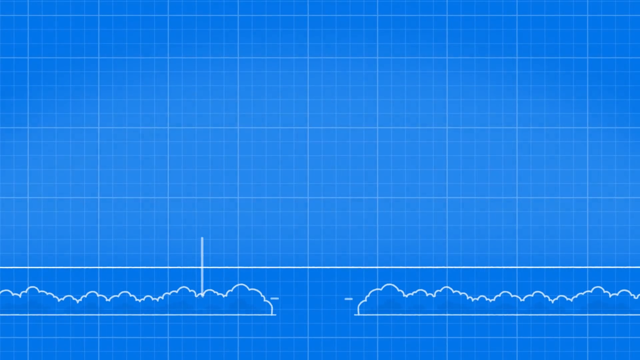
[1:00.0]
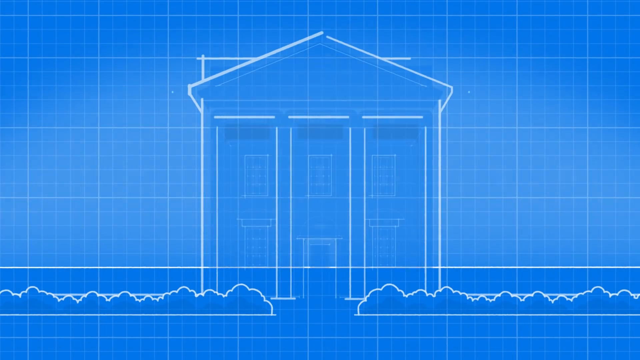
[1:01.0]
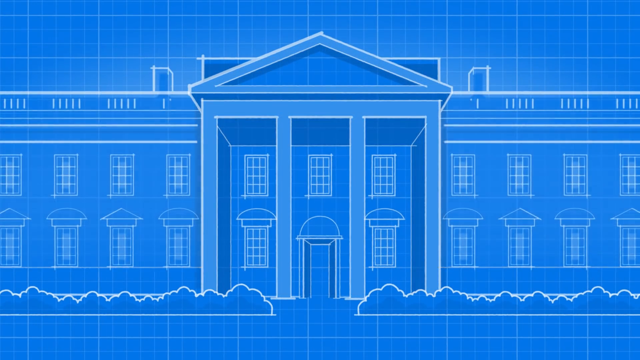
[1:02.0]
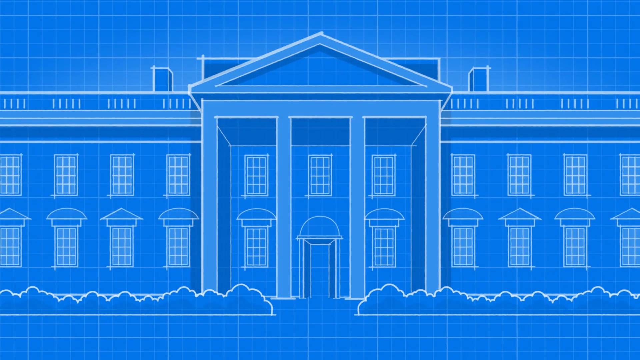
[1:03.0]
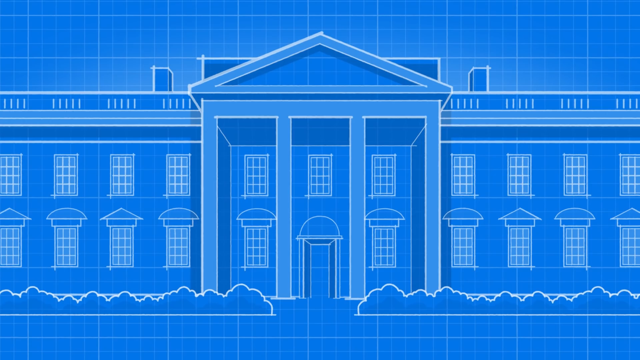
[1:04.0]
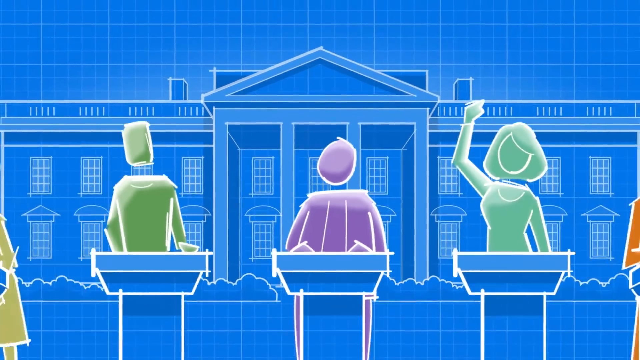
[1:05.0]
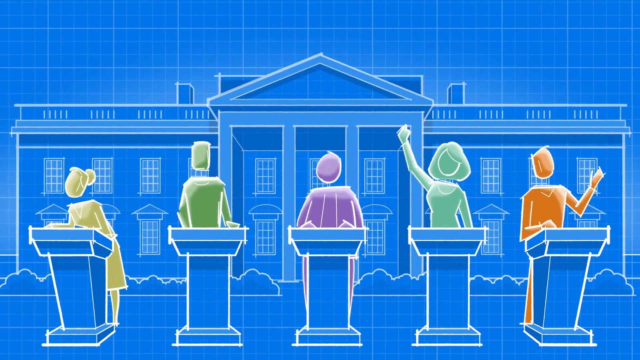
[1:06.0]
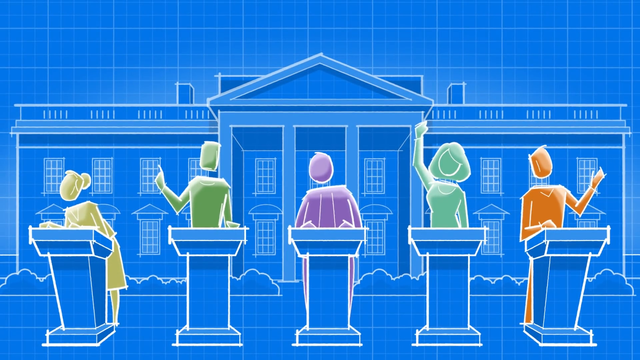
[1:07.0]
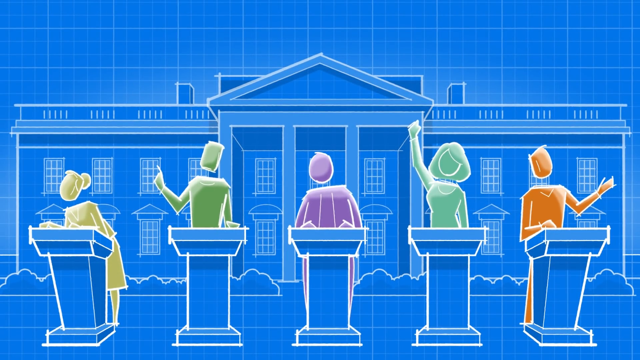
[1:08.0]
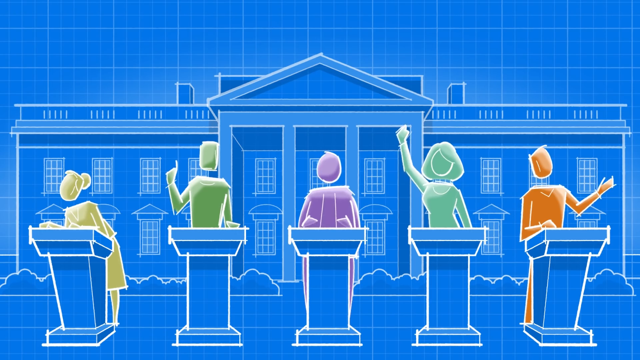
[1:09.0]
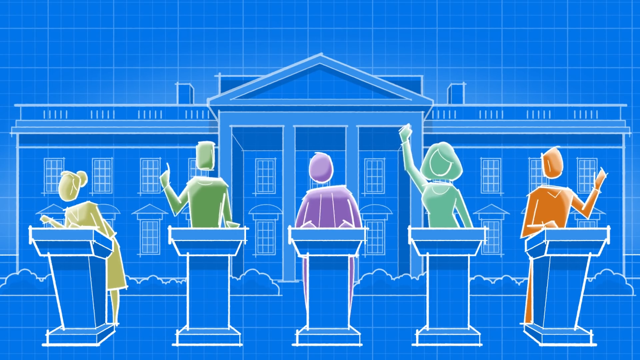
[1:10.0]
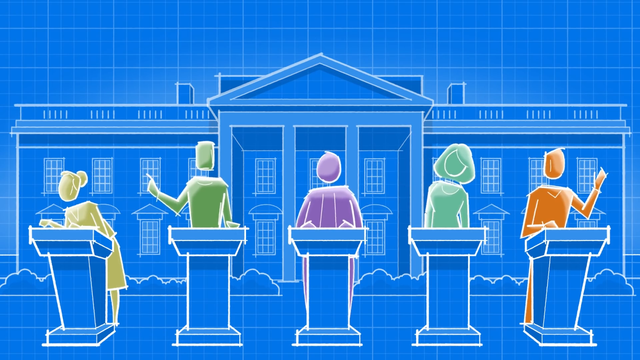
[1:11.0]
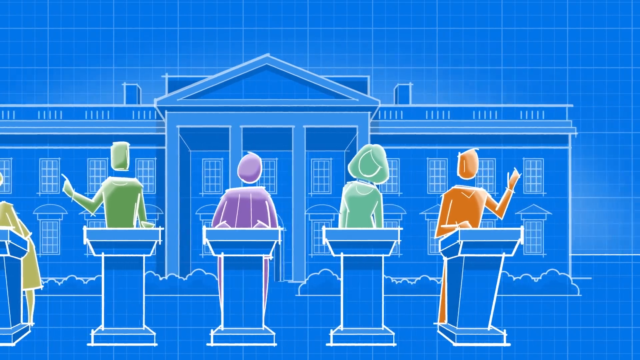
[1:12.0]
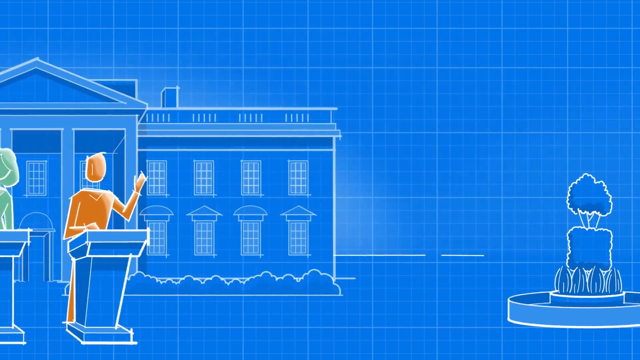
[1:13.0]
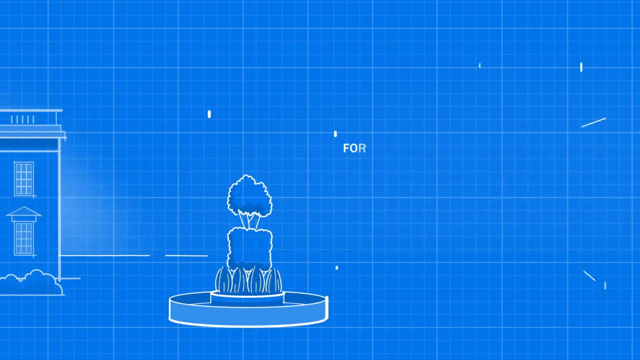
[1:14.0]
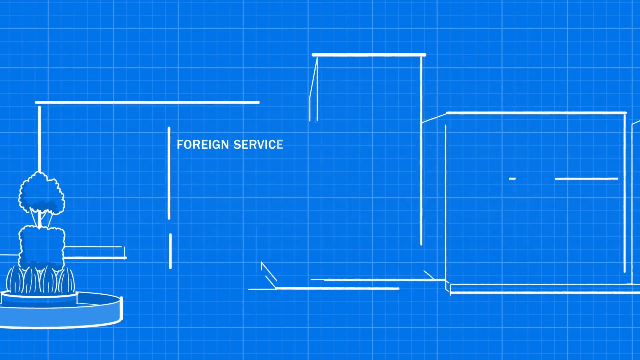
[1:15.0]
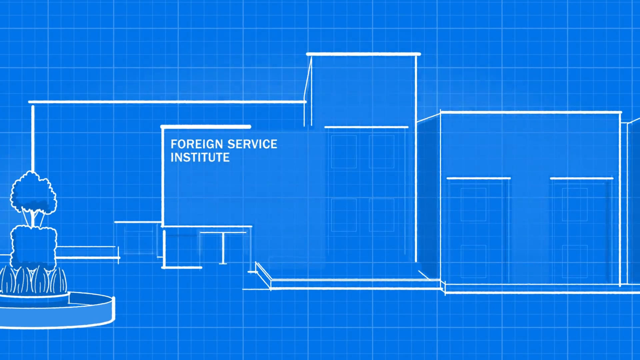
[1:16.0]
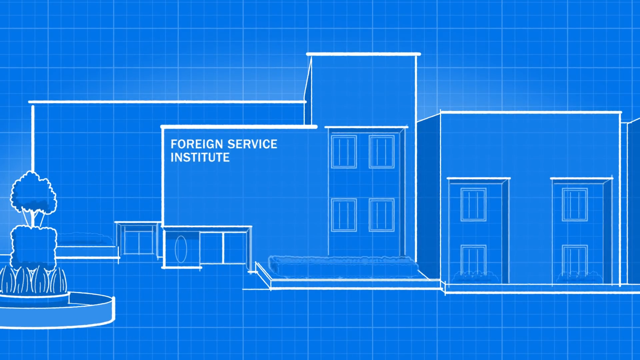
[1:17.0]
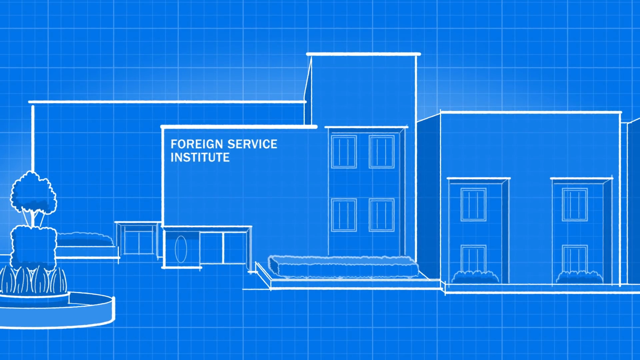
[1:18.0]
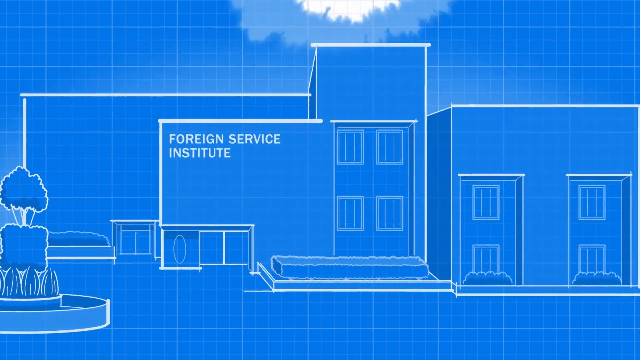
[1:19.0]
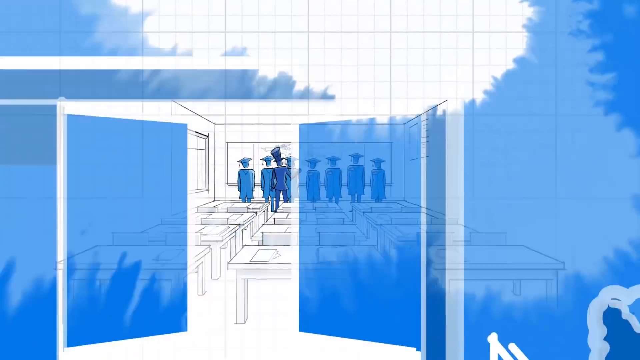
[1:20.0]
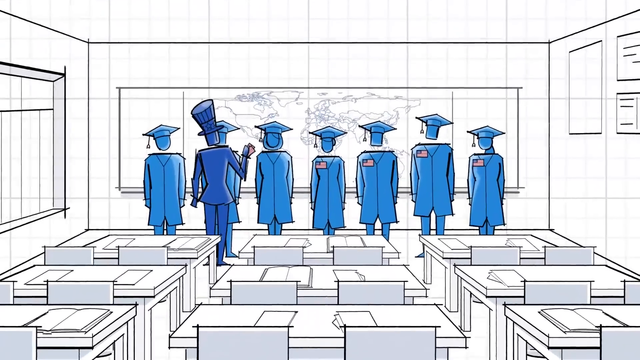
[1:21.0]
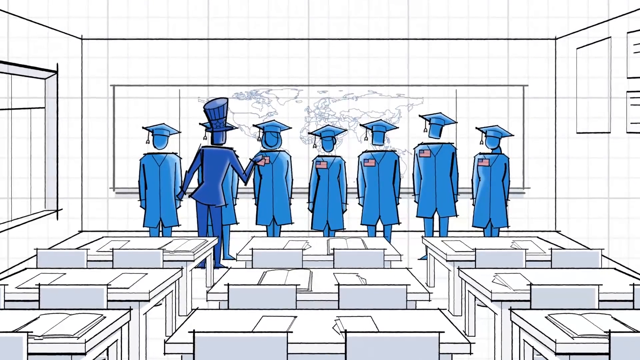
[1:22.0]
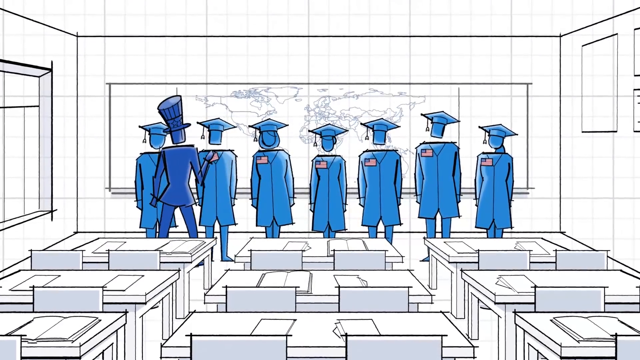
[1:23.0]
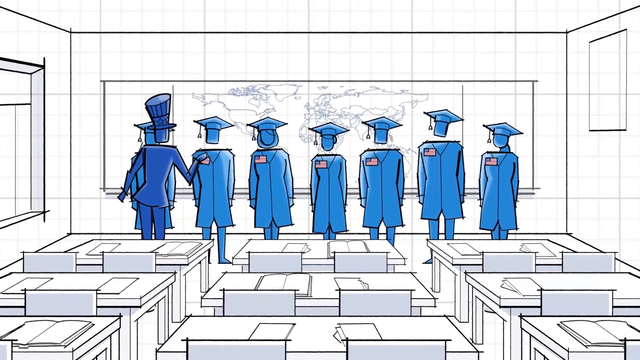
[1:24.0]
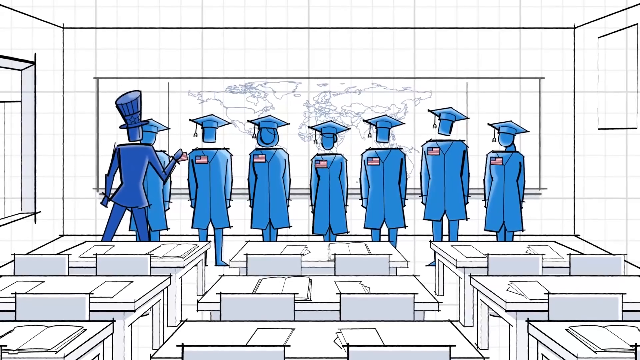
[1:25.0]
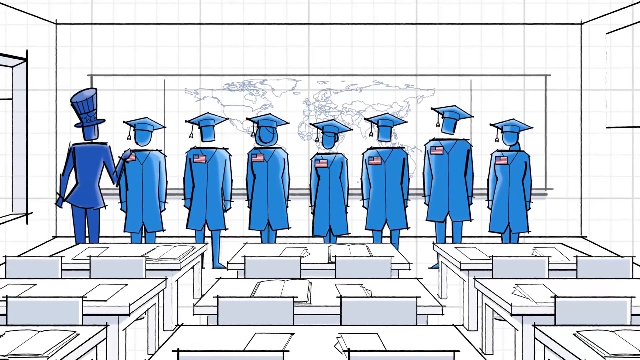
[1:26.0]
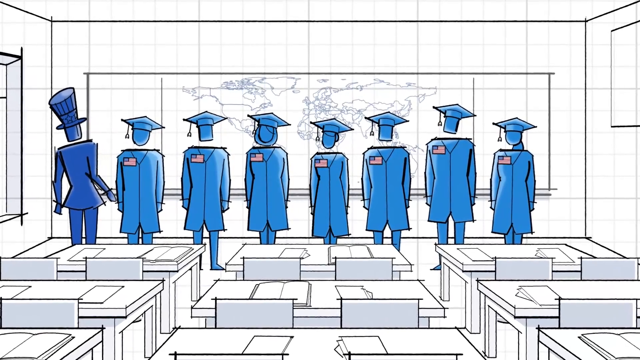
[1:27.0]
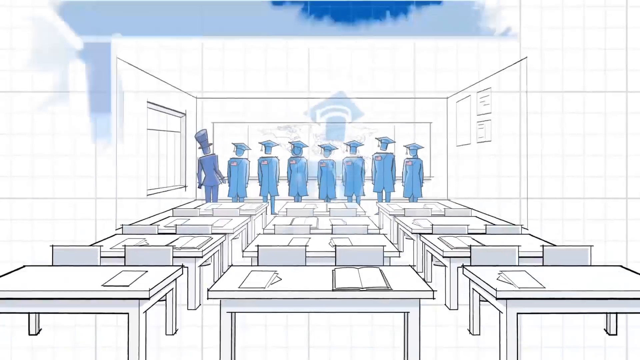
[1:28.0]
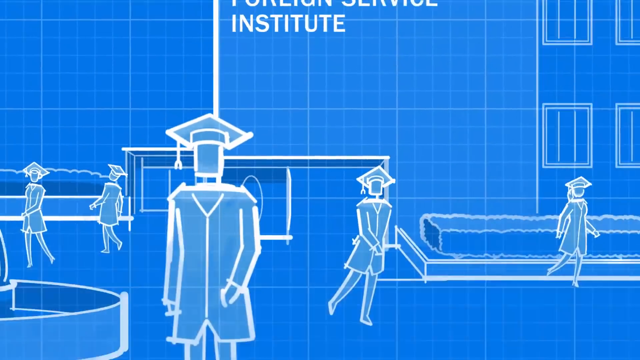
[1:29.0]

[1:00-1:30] People of different colours are standing at a podium, possibly in front of the White House or some professional building. The view then goes left to a building that says "Foreign Service Institute." It zooms in on a group of people at a graduation being given something like a badge. The people then leave the building and go out into the world. The fast-moving graphics seem to show the process of working for the government, with many different scenes and animations.